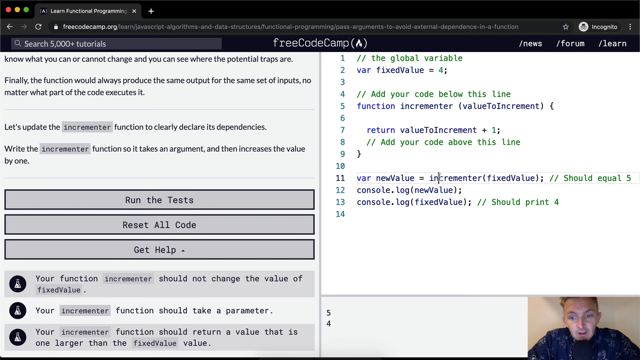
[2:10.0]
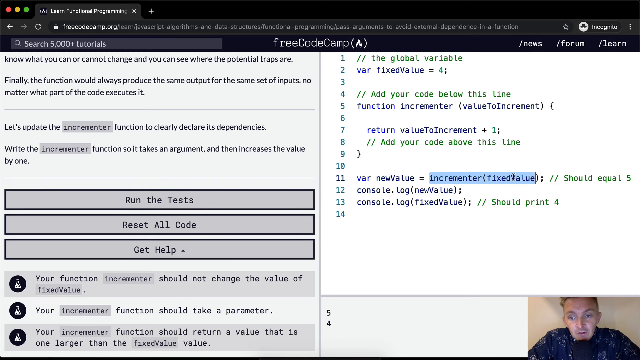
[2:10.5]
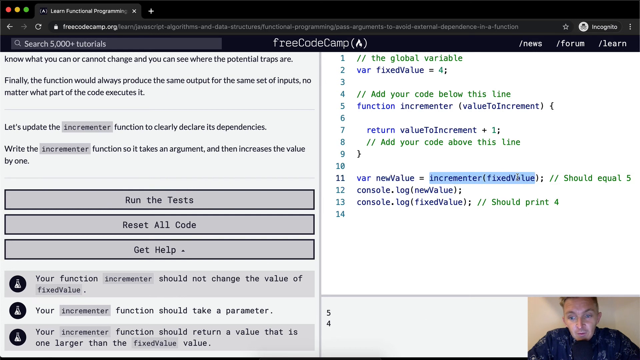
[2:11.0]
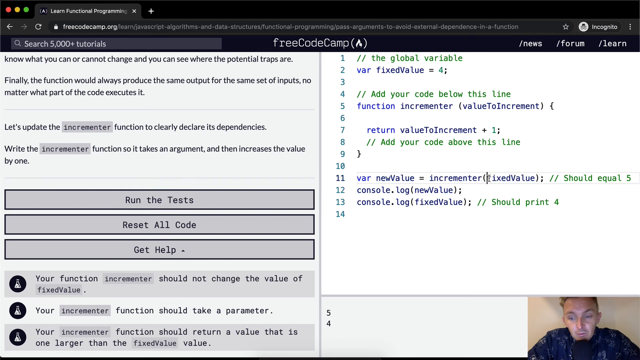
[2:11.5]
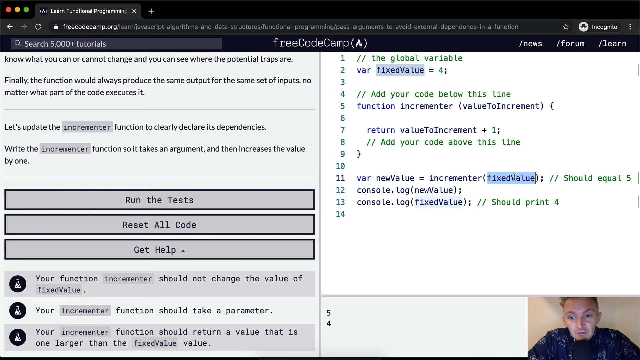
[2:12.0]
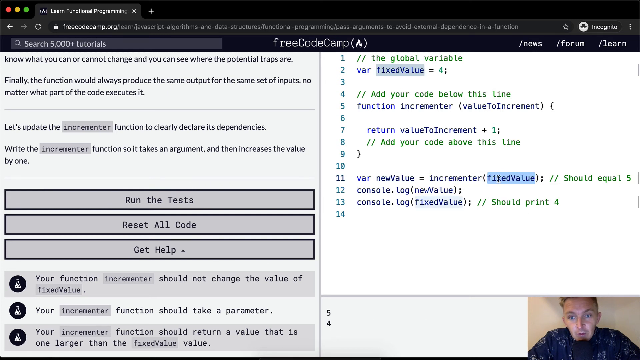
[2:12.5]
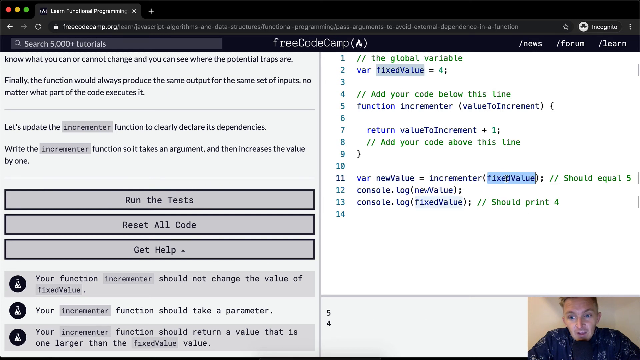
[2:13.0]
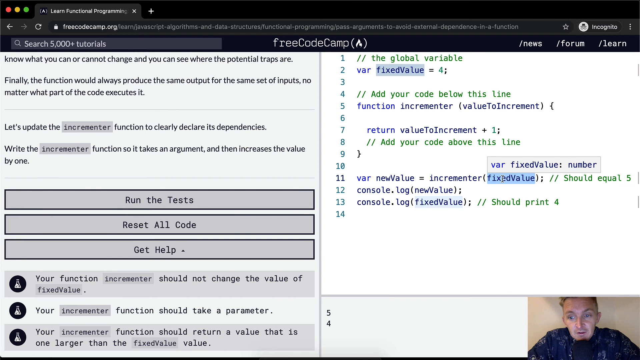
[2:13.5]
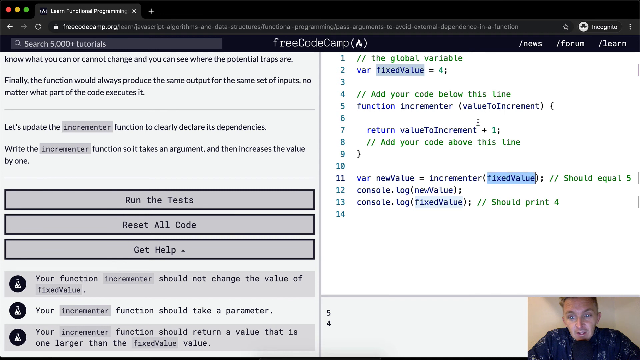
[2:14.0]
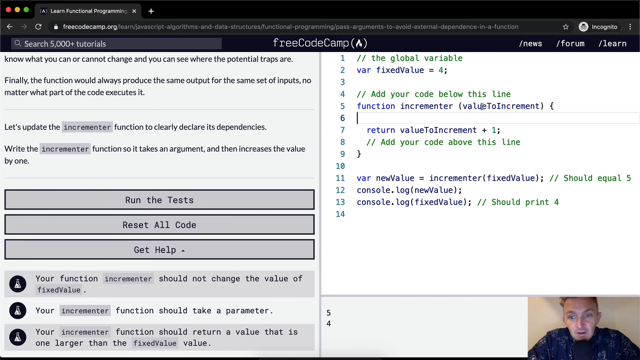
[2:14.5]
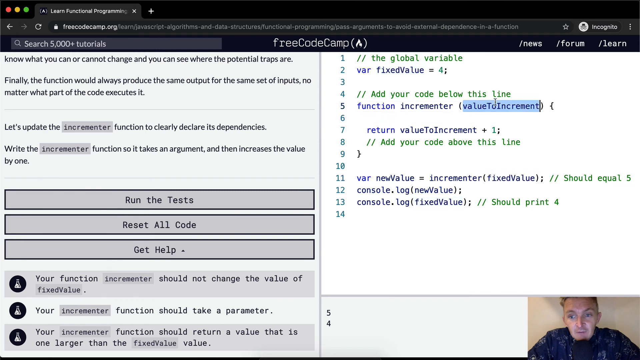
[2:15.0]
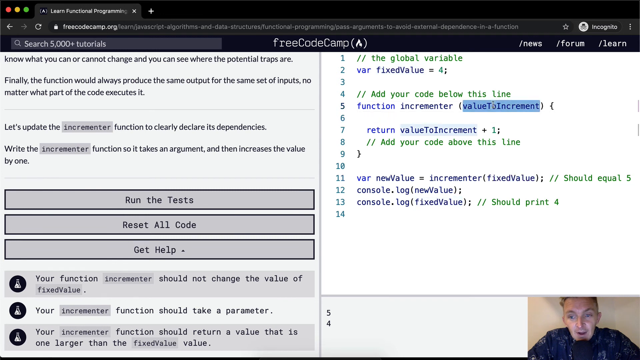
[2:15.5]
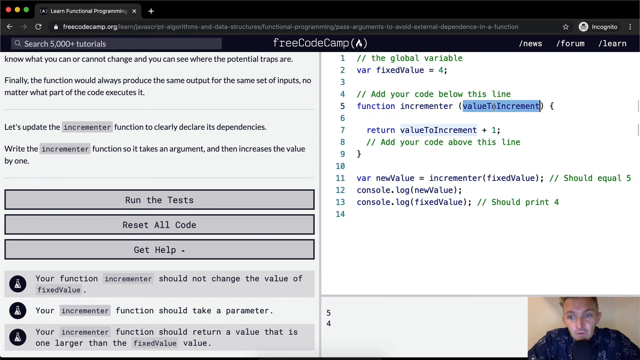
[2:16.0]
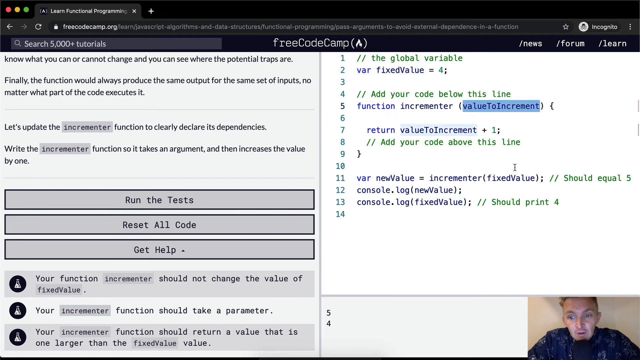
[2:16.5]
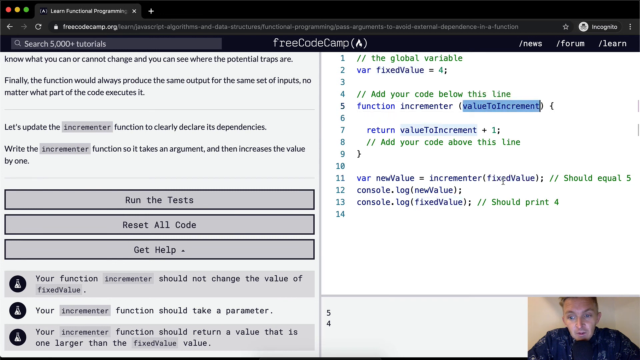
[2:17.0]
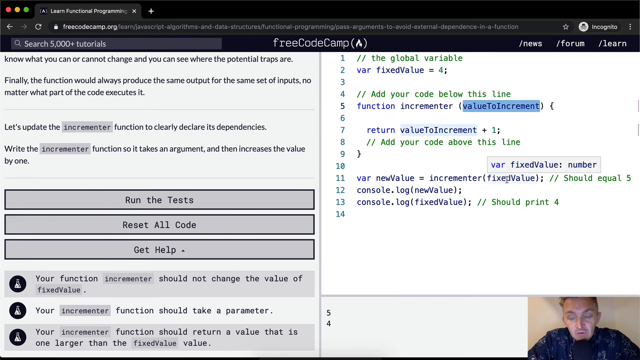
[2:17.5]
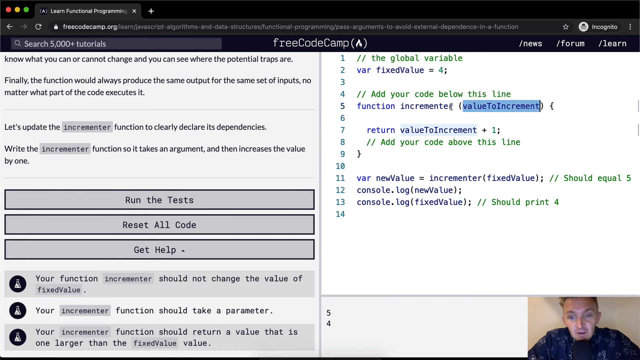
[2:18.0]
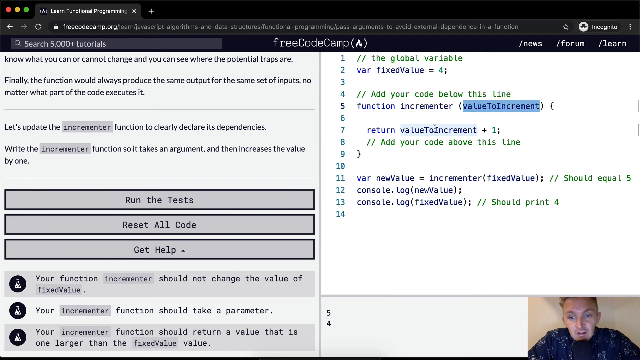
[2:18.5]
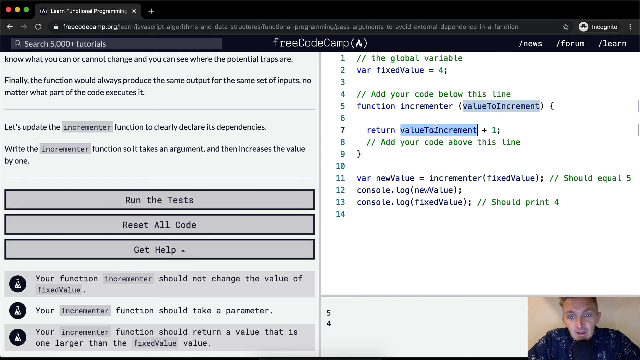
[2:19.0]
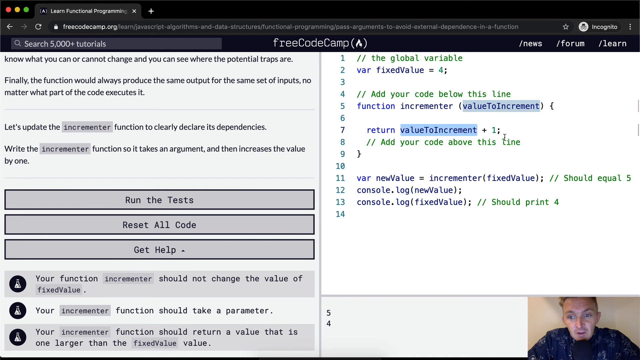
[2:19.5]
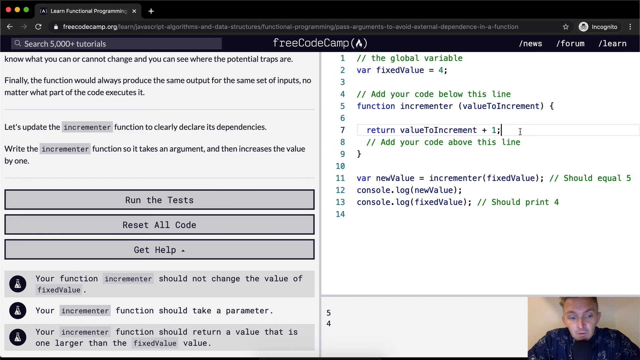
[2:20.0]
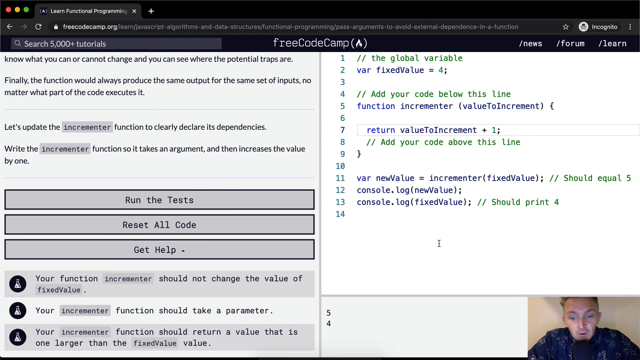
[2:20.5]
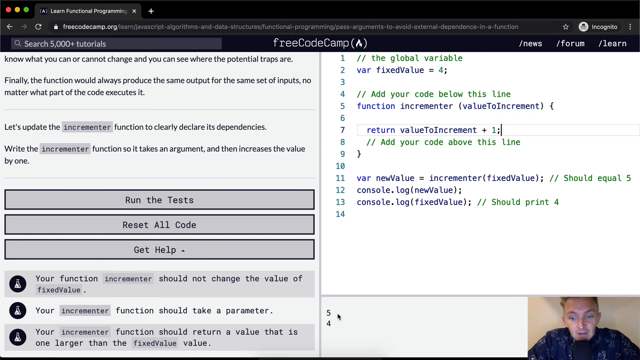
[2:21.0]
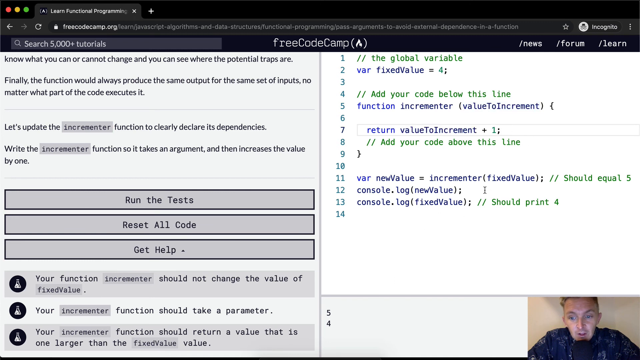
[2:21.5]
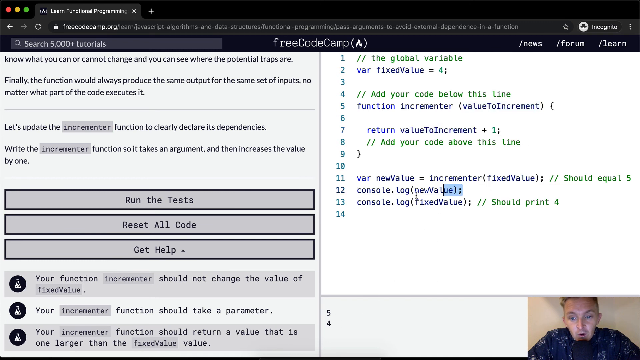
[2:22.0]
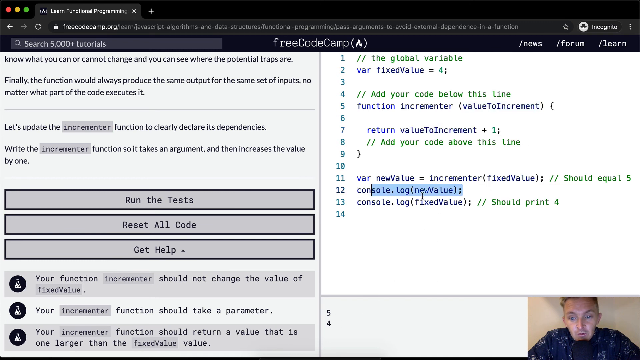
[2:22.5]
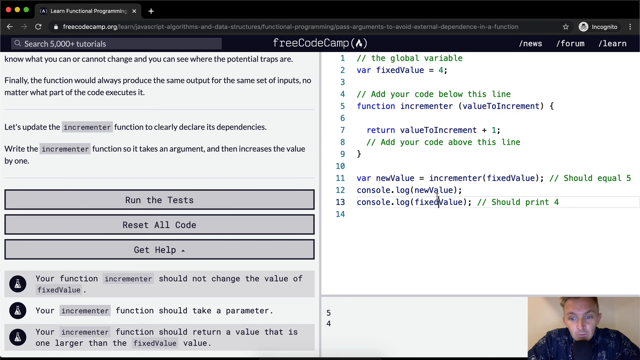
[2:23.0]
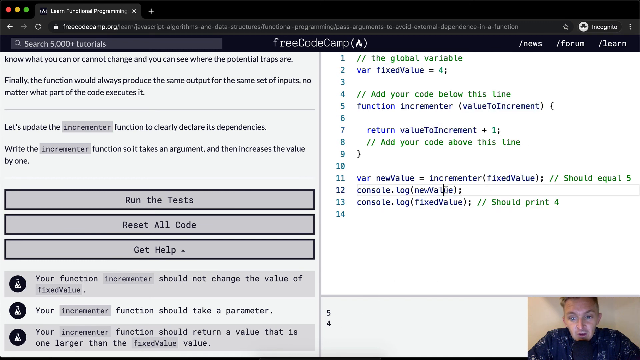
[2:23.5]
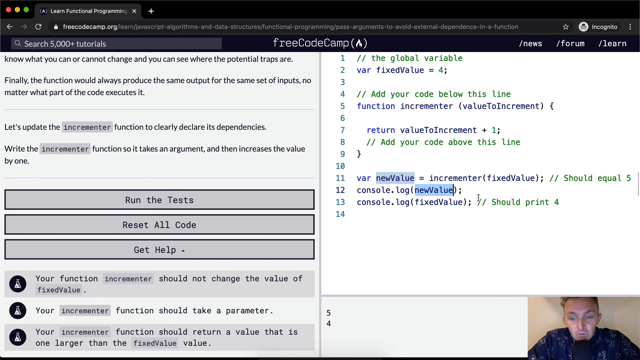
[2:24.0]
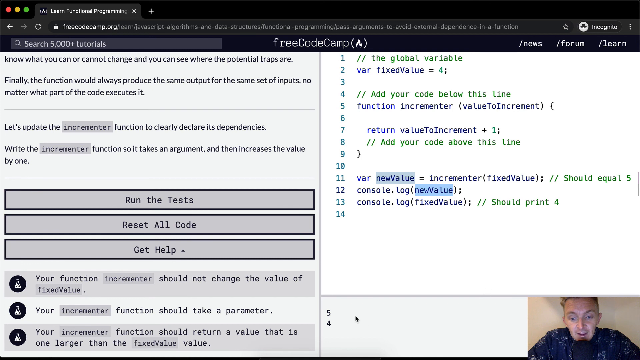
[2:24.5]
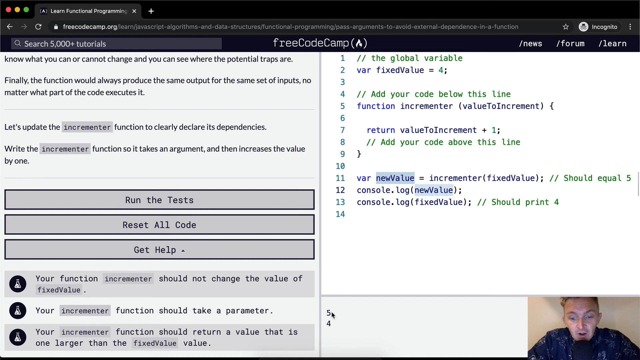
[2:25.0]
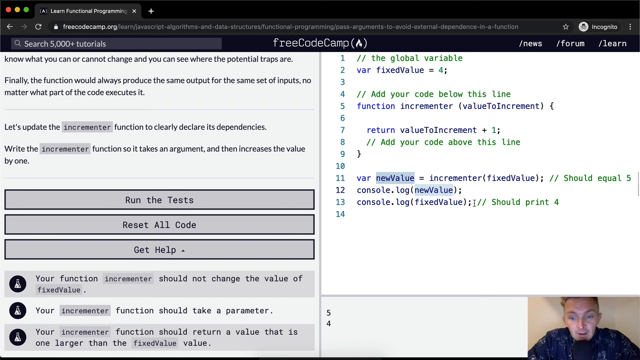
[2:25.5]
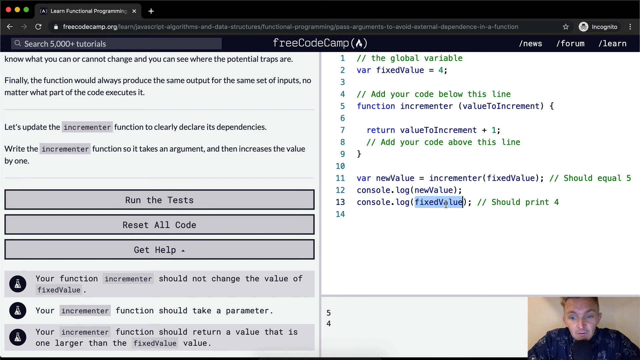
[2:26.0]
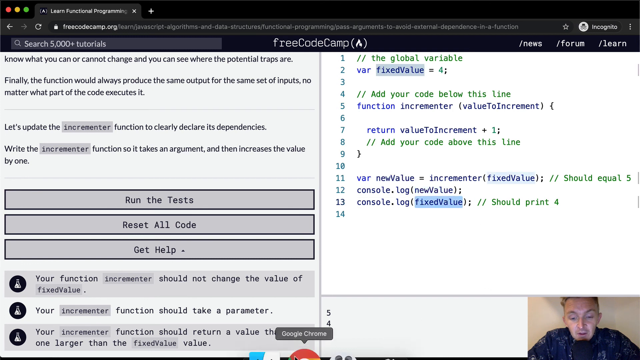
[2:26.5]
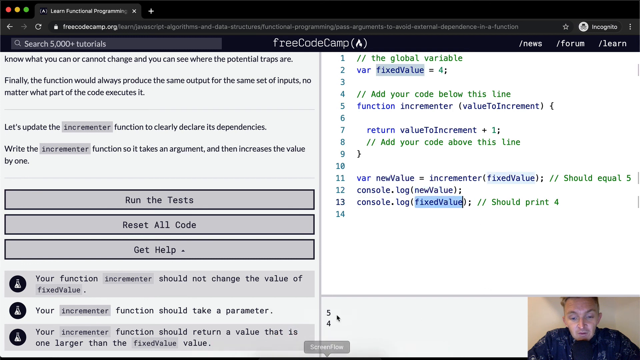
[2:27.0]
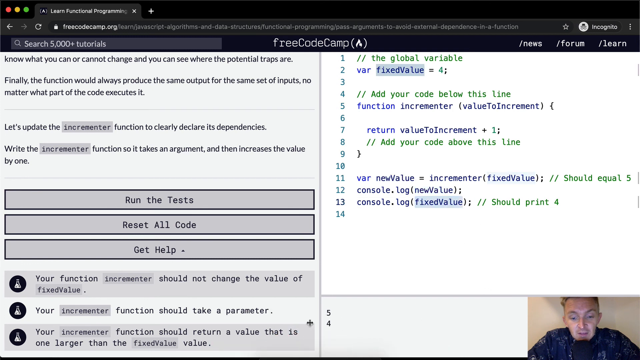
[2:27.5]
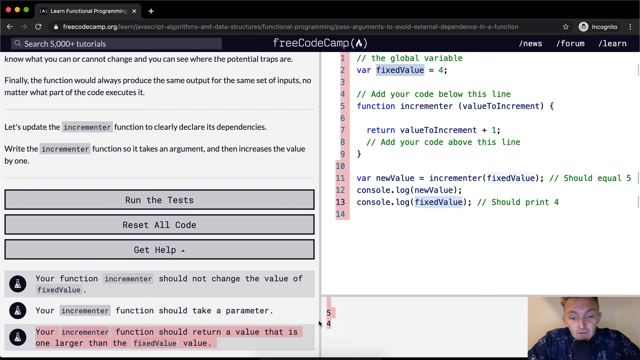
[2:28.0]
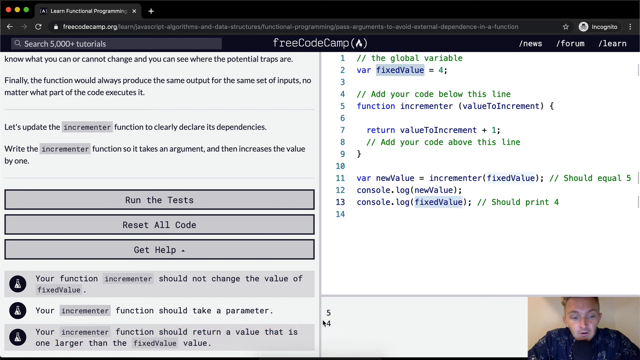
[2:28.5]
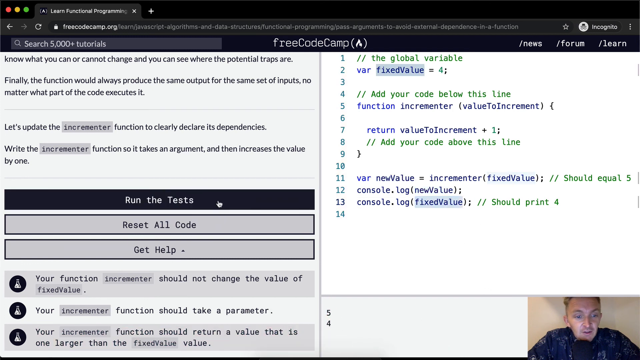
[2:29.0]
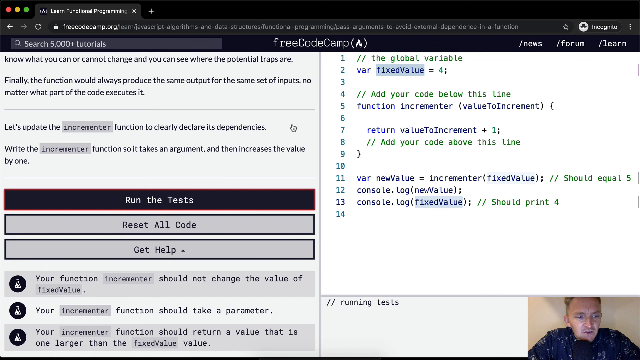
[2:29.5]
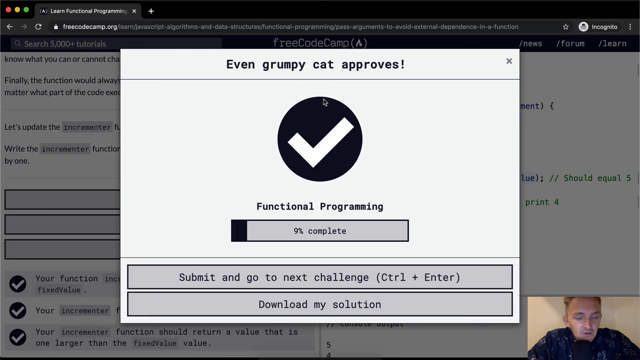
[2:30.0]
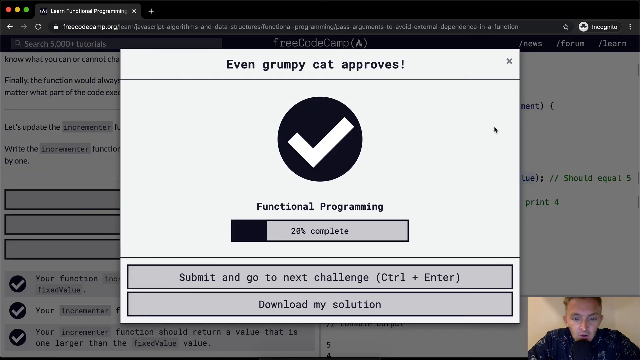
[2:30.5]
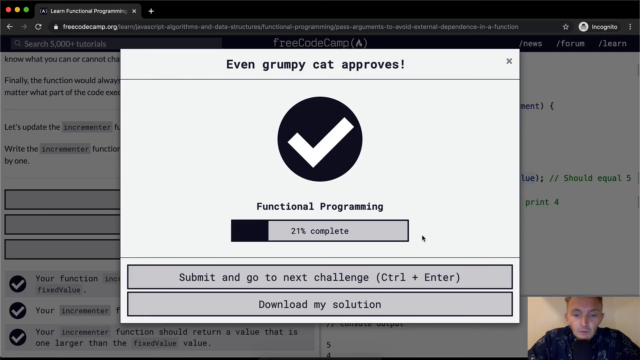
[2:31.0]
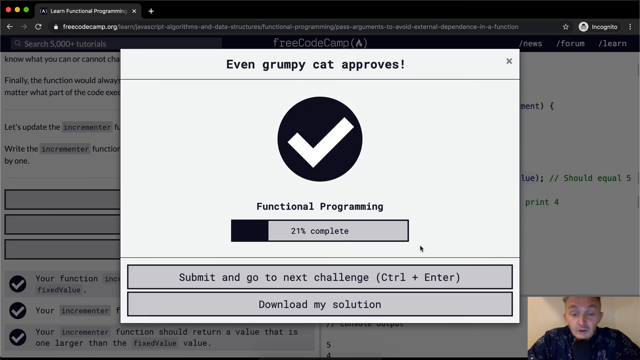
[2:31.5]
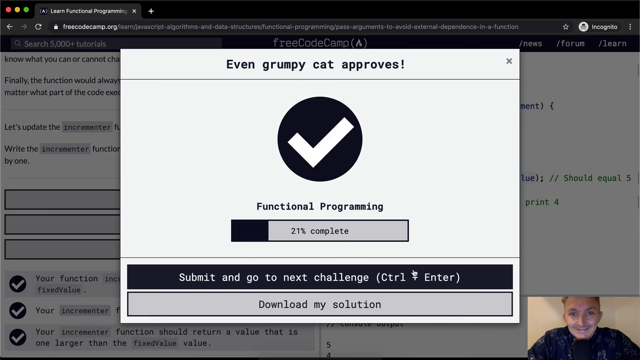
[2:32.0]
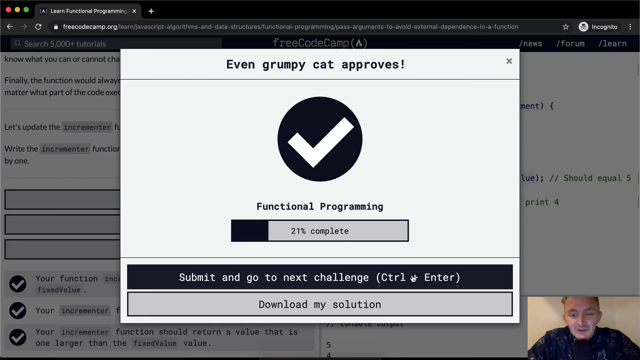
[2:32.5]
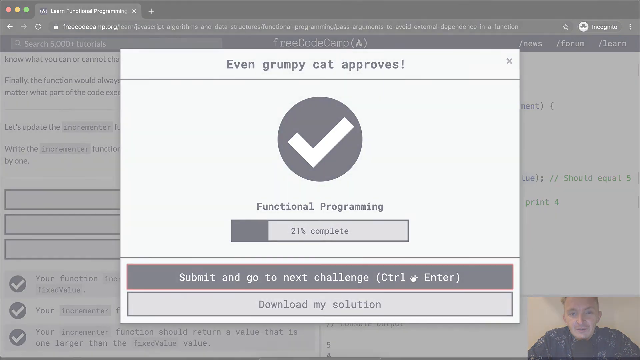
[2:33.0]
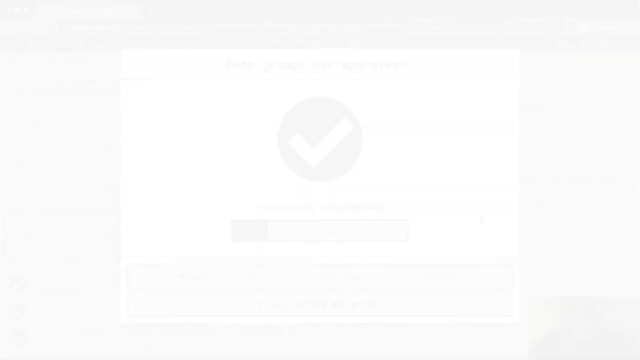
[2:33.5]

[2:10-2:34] The person highlights the fixed value and the value to increment, with 5 and 4 shown at the bottom. They run the test, which passes, marked with a right arrow, and no errors are shown. The functional programming challenge is complete, and text reads "Submit and go to the next challenge."